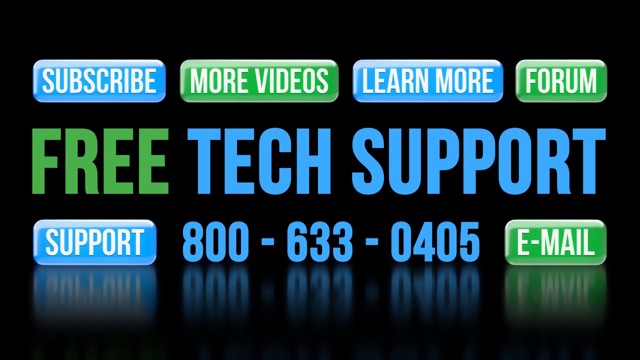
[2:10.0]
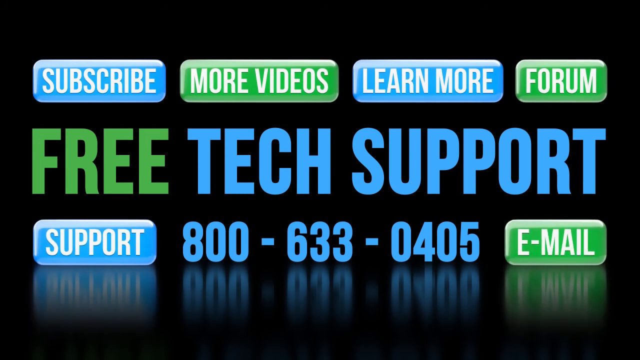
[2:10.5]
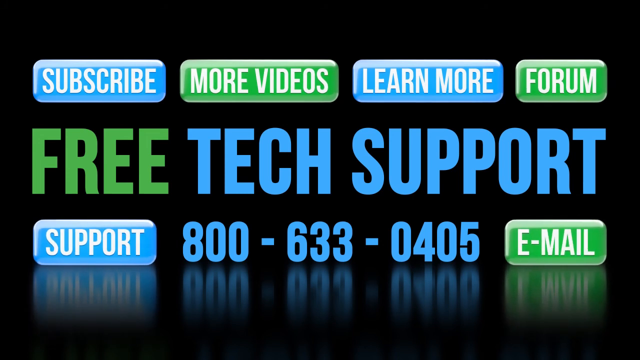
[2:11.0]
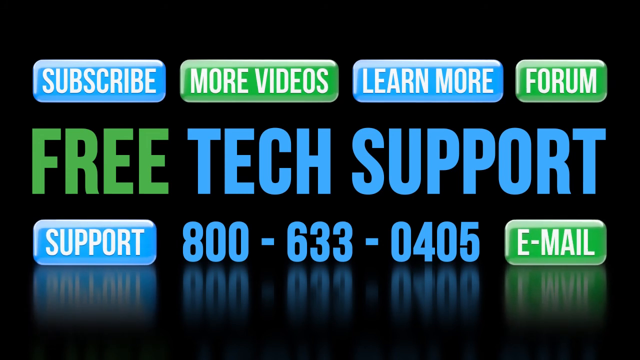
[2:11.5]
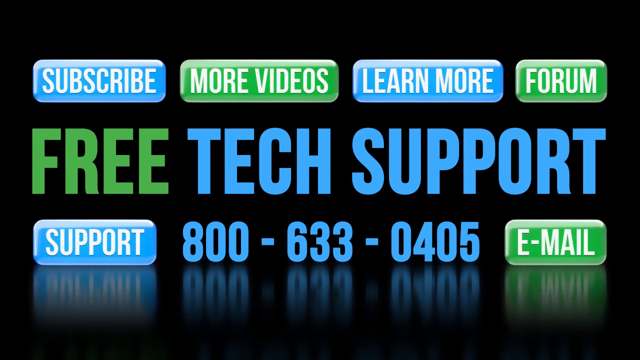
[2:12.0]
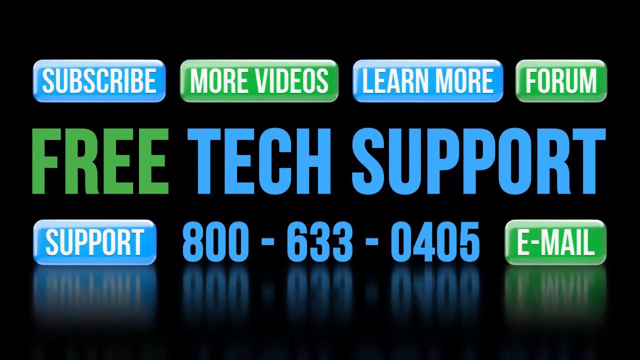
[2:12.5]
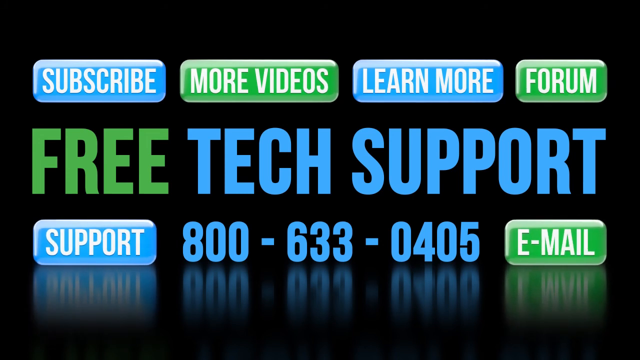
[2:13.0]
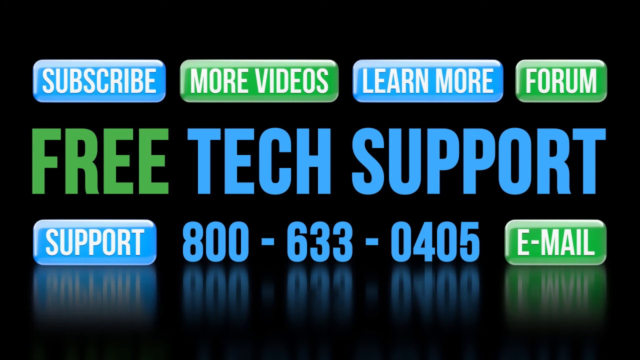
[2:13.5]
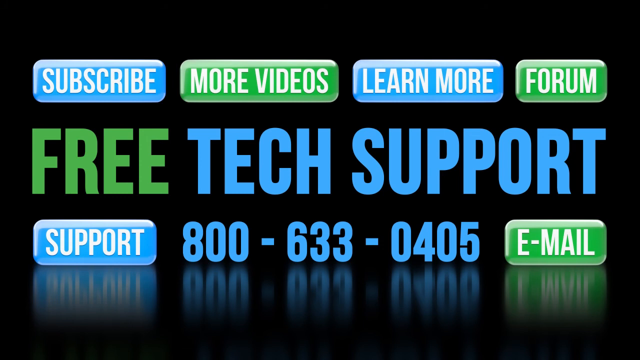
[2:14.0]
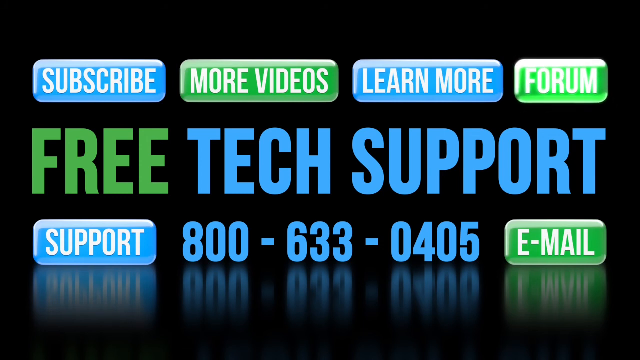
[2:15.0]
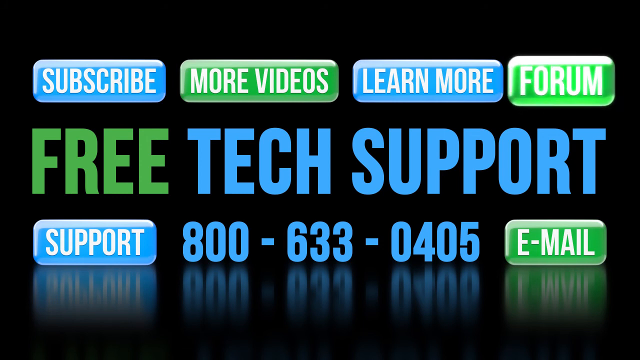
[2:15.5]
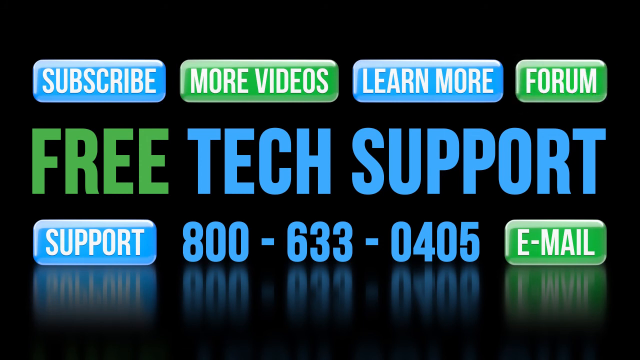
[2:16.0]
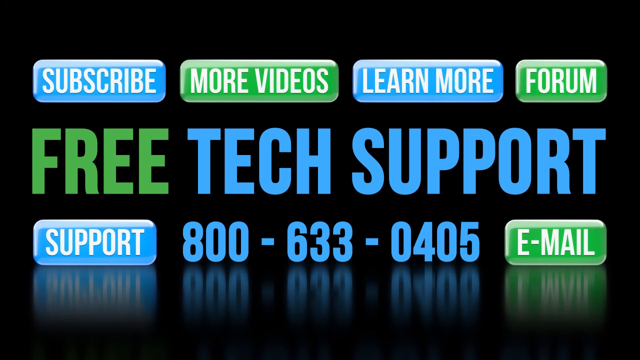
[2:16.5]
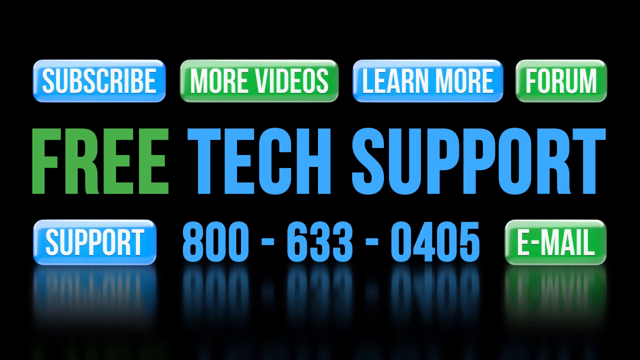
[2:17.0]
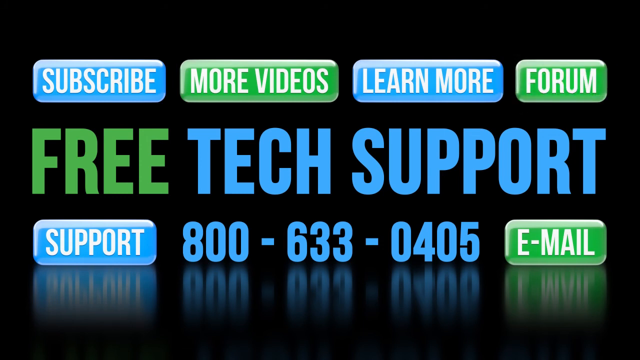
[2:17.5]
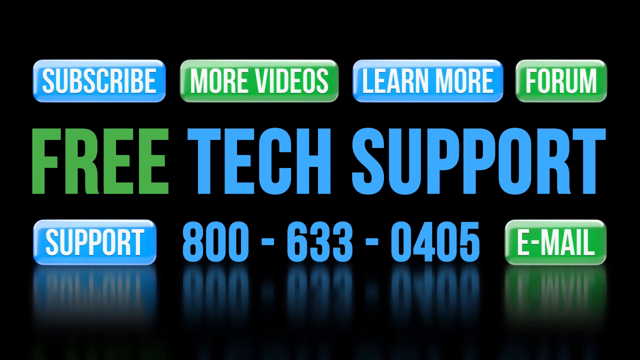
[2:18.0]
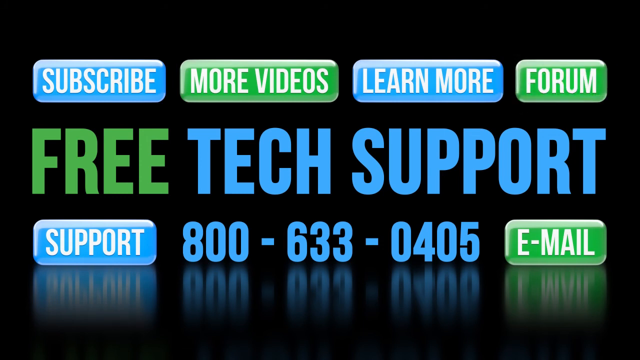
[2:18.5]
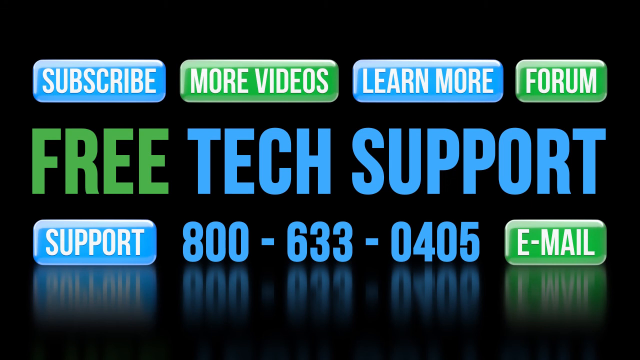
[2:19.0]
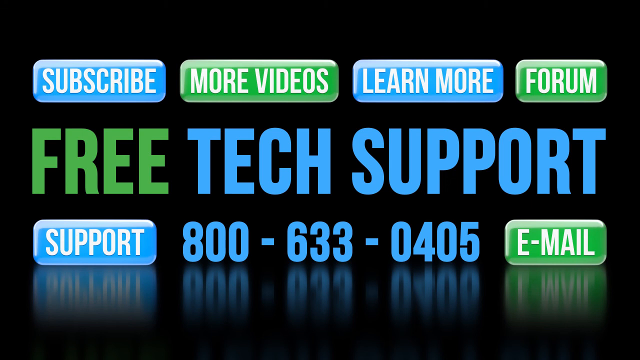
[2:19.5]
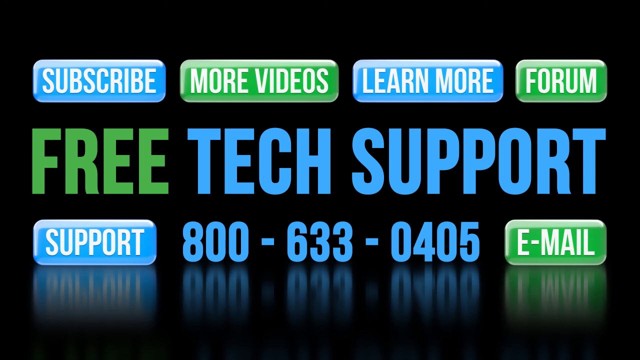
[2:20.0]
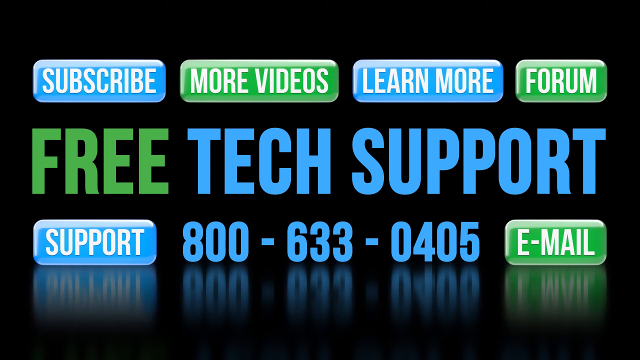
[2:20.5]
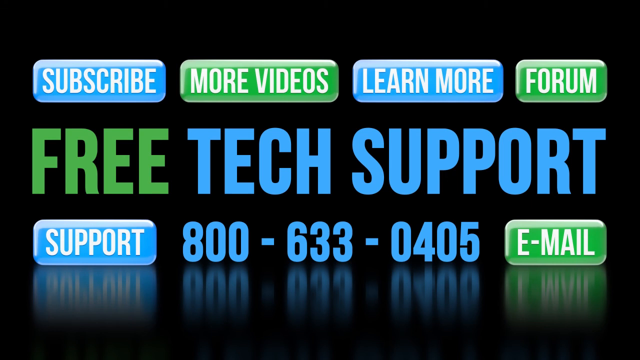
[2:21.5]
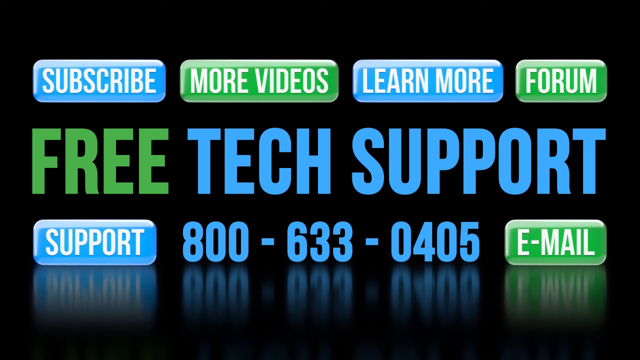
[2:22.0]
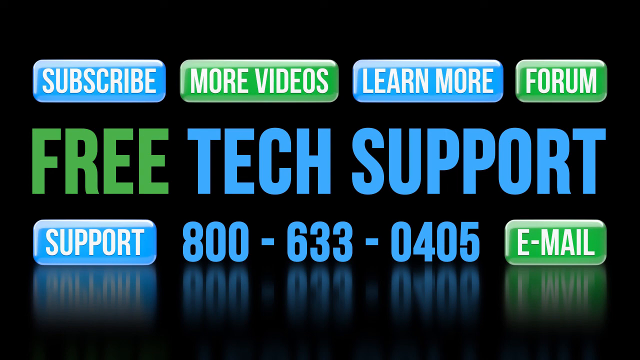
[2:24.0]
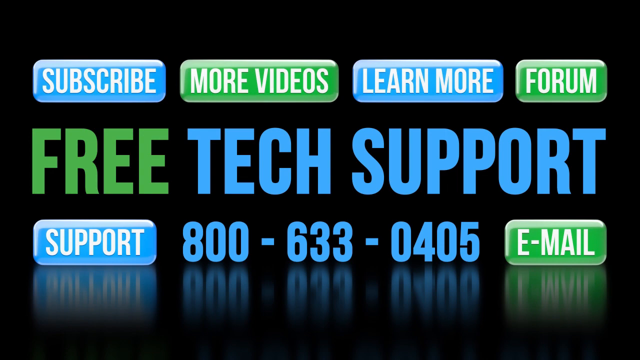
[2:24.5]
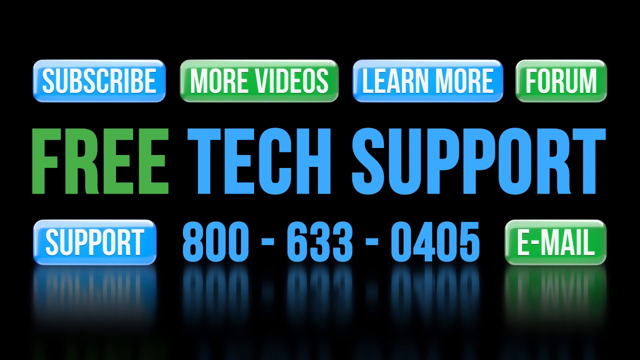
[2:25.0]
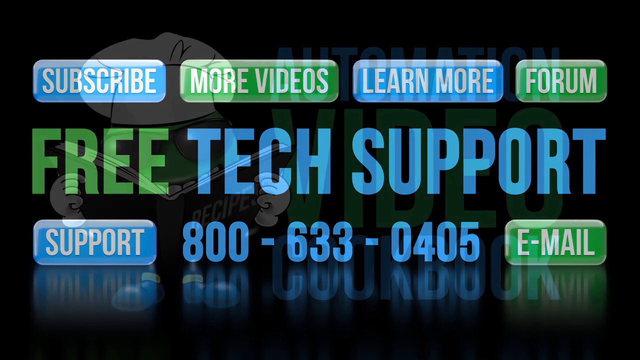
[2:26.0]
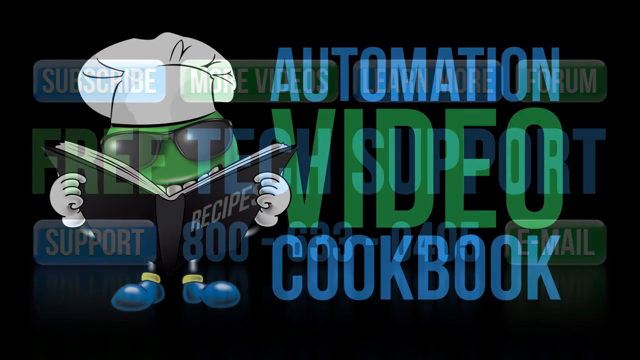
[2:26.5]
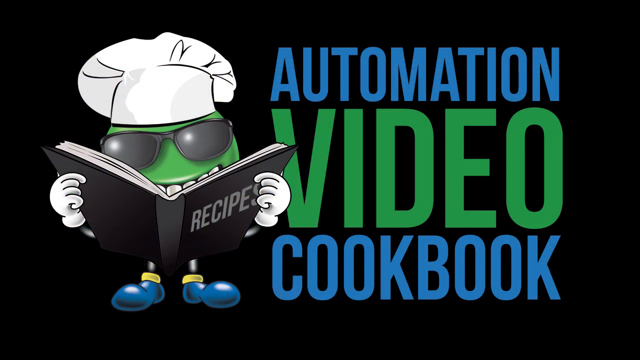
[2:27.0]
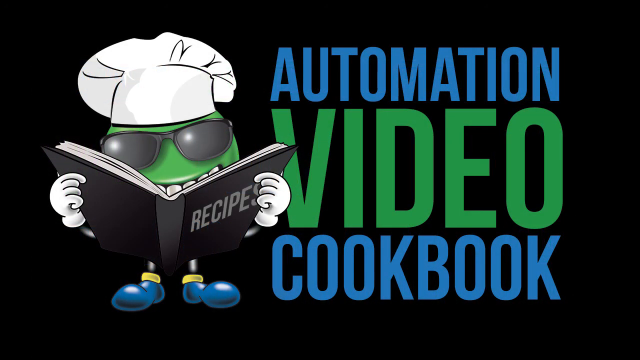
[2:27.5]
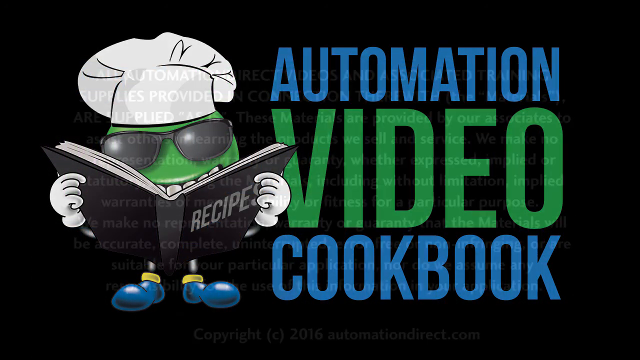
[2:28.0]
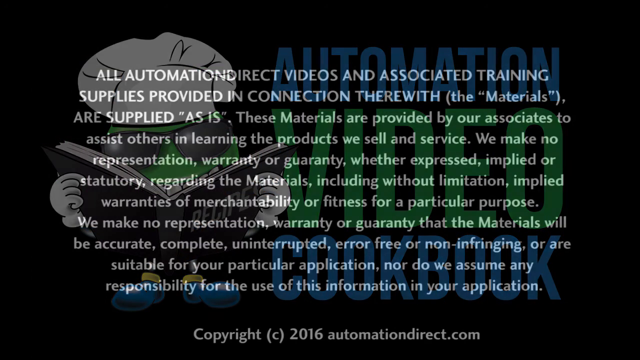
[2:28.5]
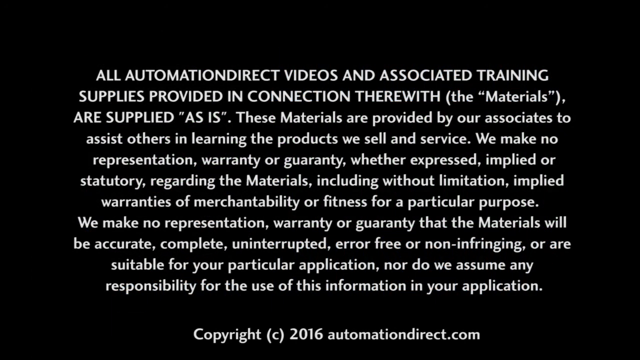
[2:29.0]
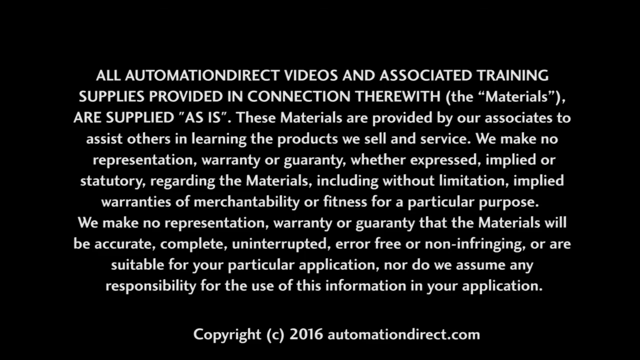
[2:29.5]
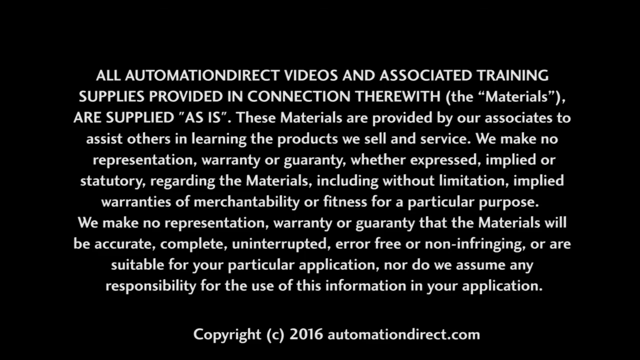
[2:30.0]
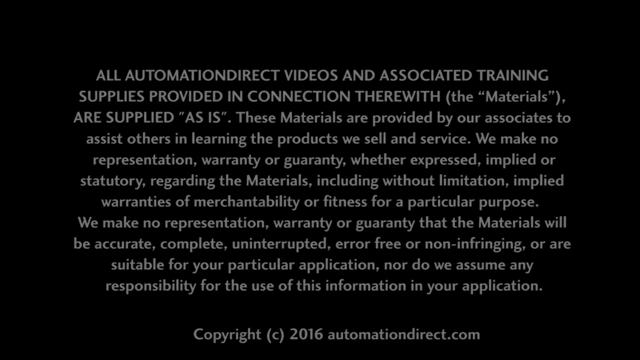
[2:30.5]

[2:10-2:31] A screen reads "free type support" and has a number of buttons on the top and on the bottom, including subscribe, watch videos and download. The buttons are blue and green. At the end, a text screen about automation training materials appears, stating that the materials are provided to assist others in learning the process, along with warranty language.